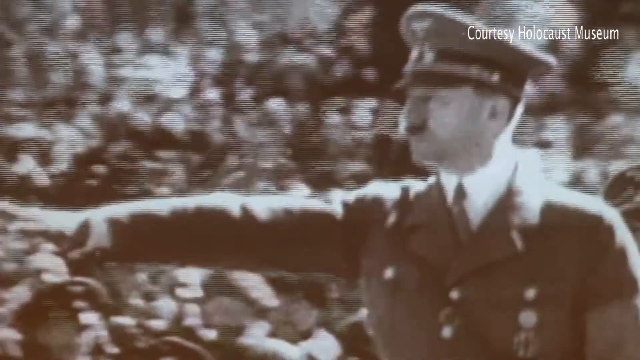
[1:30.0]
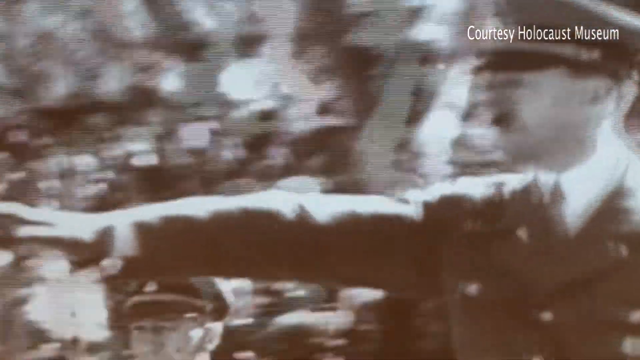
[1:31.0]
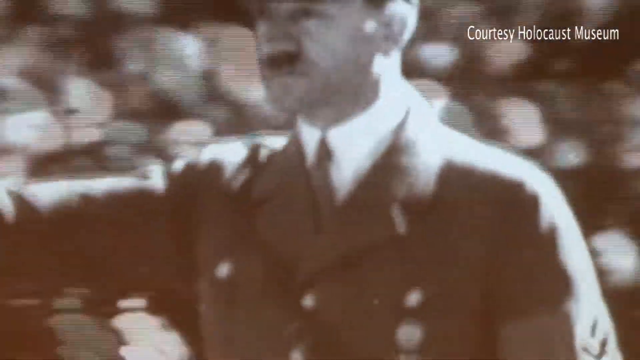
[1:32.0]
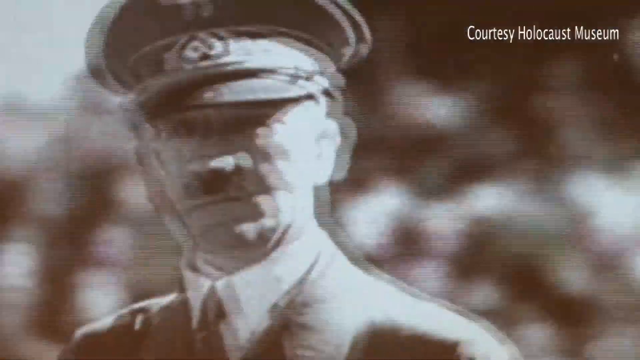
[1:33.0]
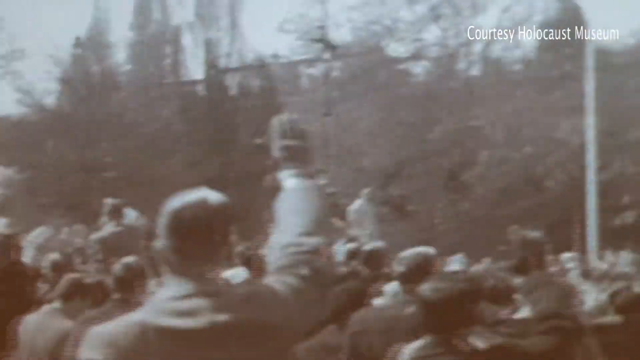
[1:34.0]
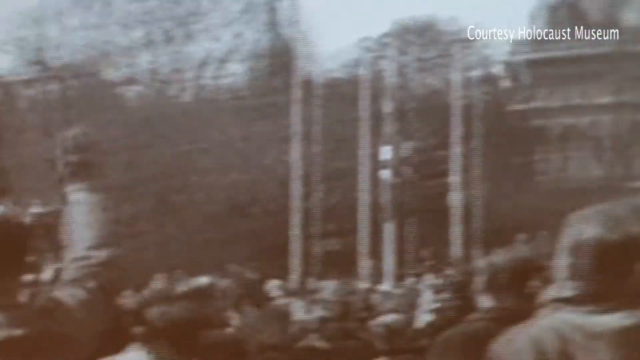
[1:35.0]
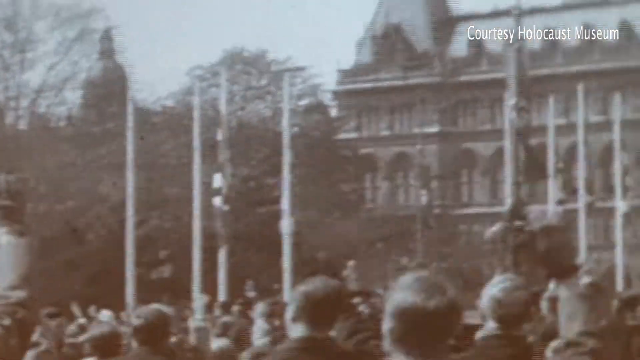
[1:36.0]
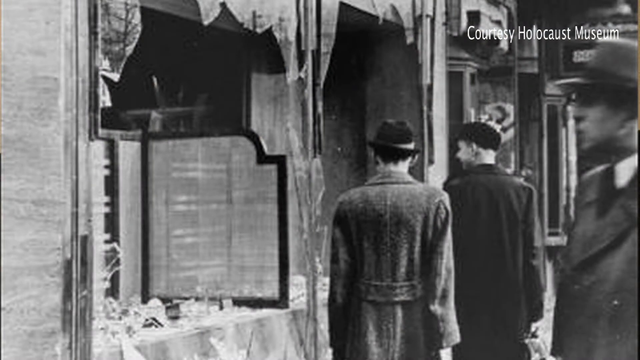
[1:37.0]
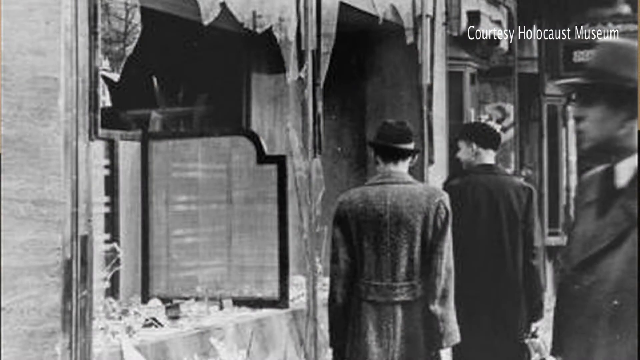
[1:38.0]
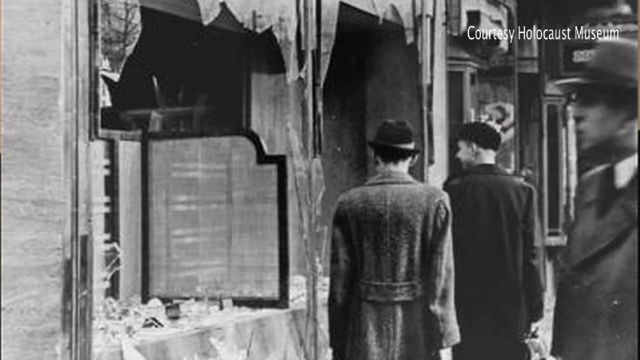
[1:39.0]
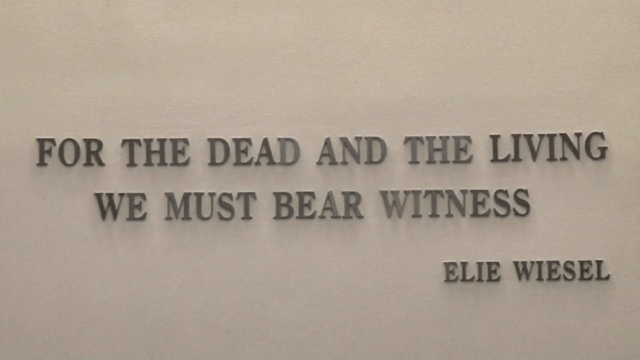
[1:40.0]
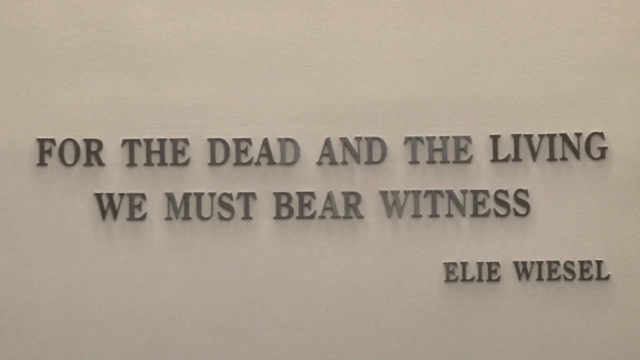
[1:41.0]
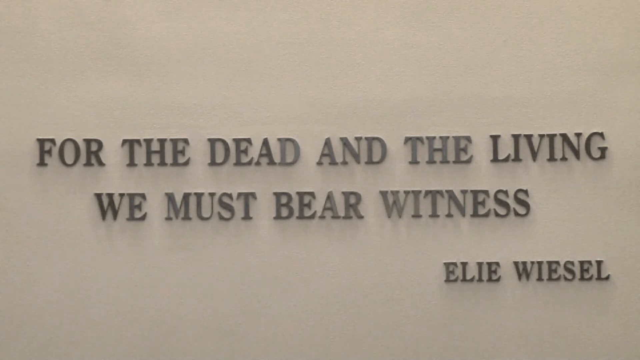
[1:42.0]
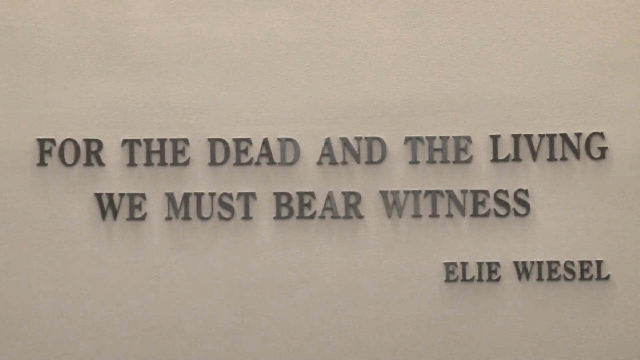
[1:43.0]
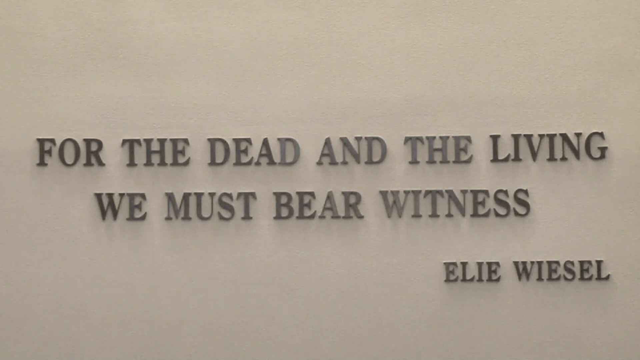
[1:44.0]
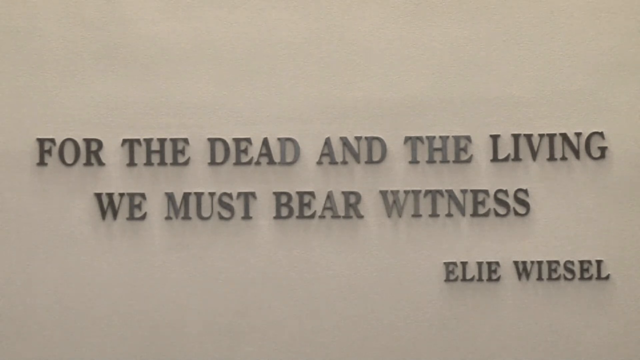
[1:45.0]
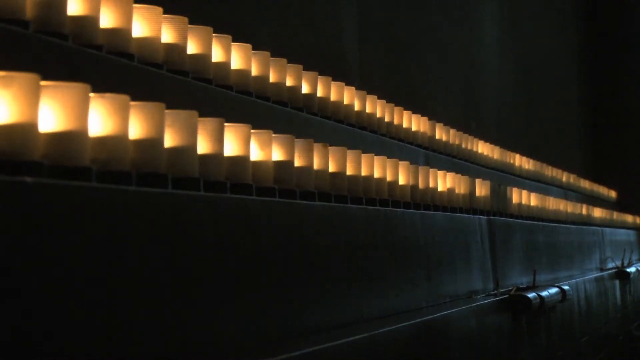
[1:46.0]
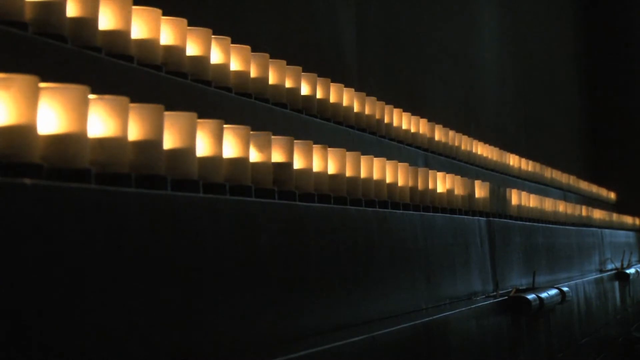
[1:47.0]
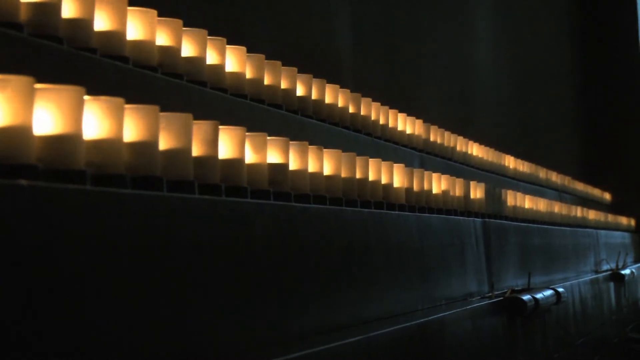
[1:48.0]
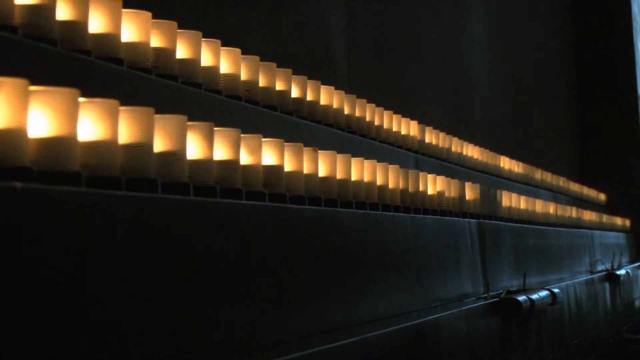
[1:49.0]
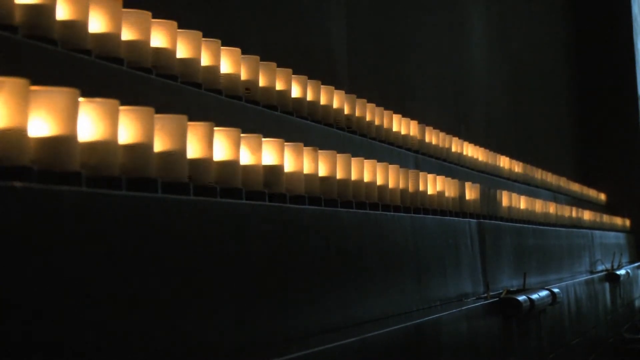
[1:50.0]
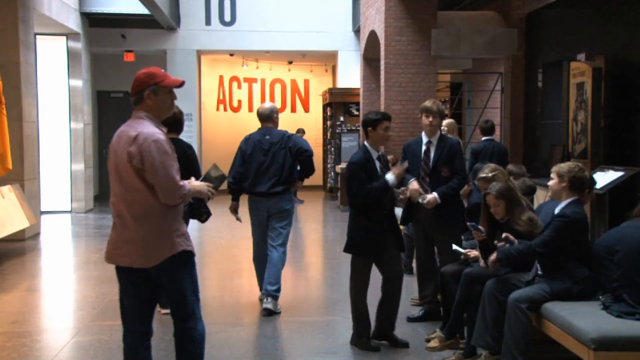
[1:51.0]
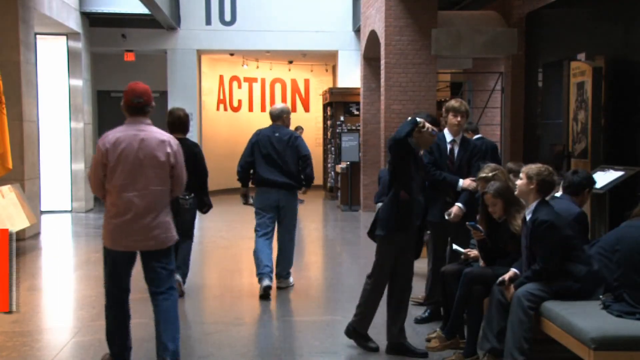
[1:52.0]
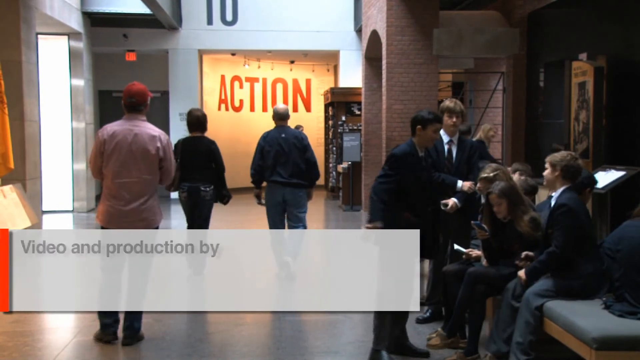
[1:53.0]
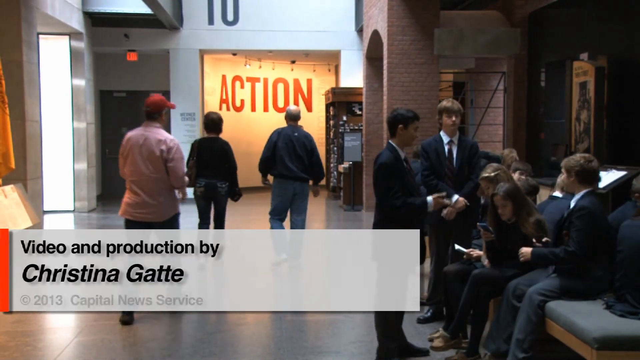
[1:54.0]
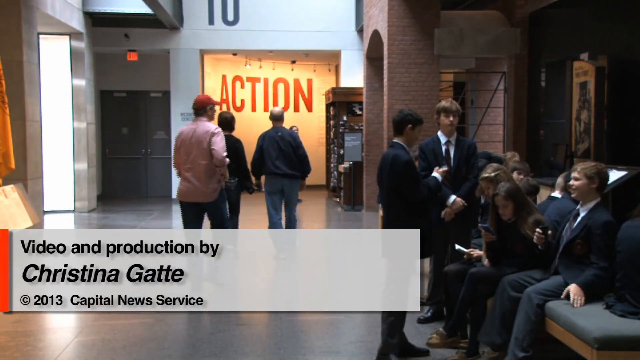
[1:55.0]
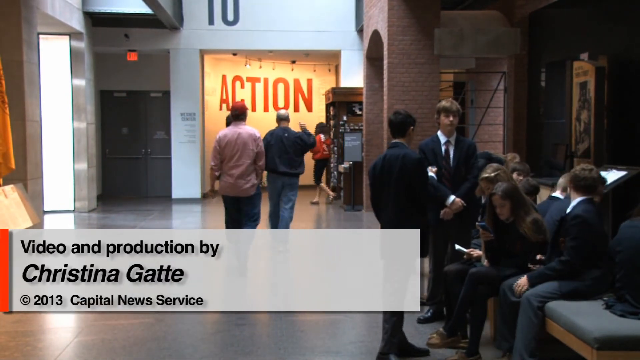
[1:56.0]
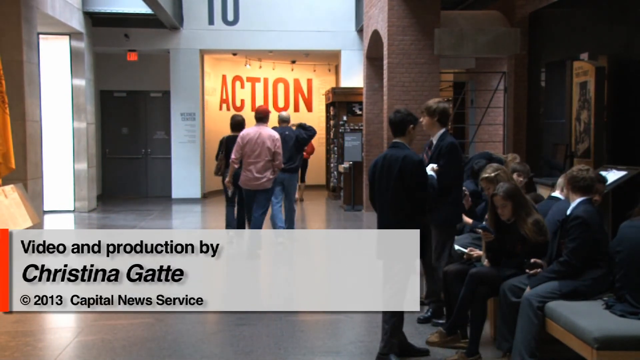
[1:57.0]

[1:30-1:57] People are very happy in a parade with a puppet, and Jill Polly, a Kristallnacht survivor, speaks into a microphone. A very old picture shows a young girl. Two Jewish storefronts are destroyed. Hebrew writing that is part of a Talmud is on a scroll laid out. Two men hold a similar scroll outside in front of a building. Wires are broken in a window. A museum is full of sepia-toned pictures, and someone looks at them. A destroyed copy of the Talmud appears. Men with Nazi insignia and Nazi uniforms march in a parade, waving and saluting, then casually walk around the street. A small building's roof is on fire, then a larger building's roof is on fire while many people, probably 50 to 60, watch. Back in the museum, people look at pictures on the wall, and then the panel being interviewed appears. Christina Gatti, the CNS TV reporter, is inside the Holocaust Museum in front of names of people who were killed. Pictures of the synagogue burning follow, then a picture of Hitler.